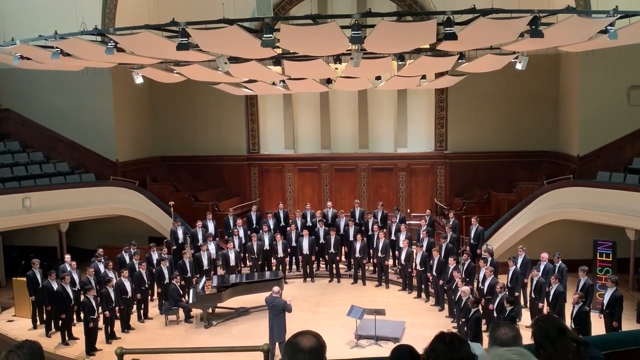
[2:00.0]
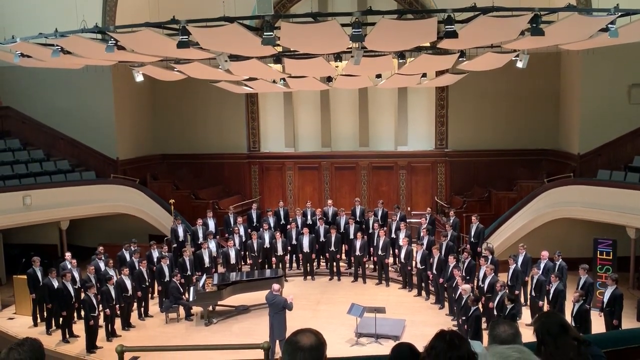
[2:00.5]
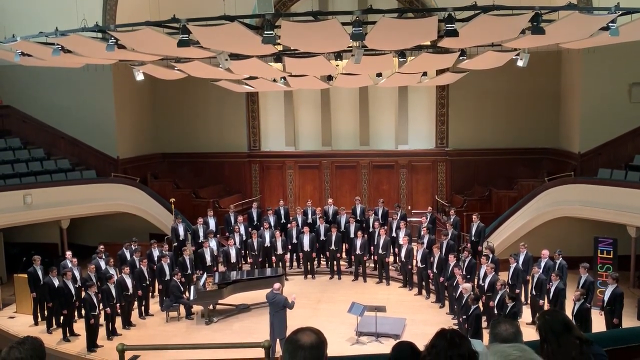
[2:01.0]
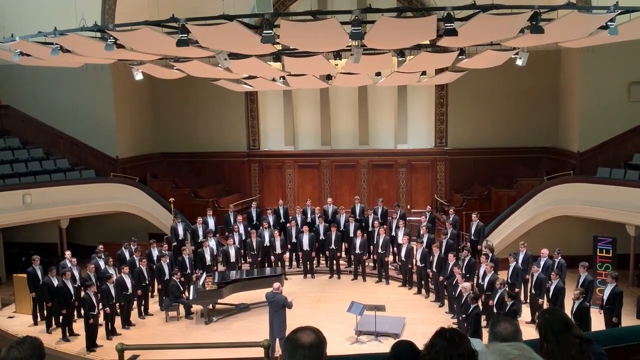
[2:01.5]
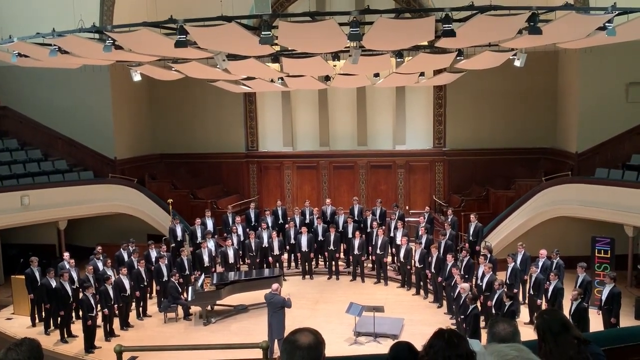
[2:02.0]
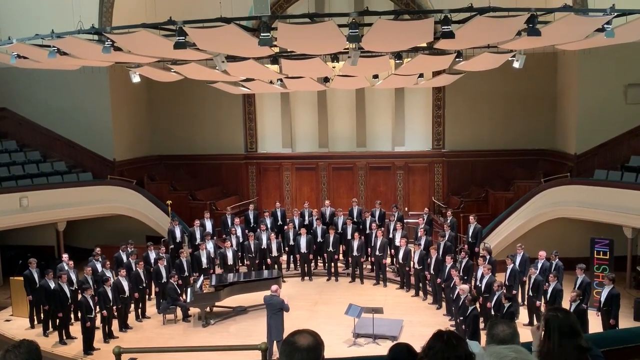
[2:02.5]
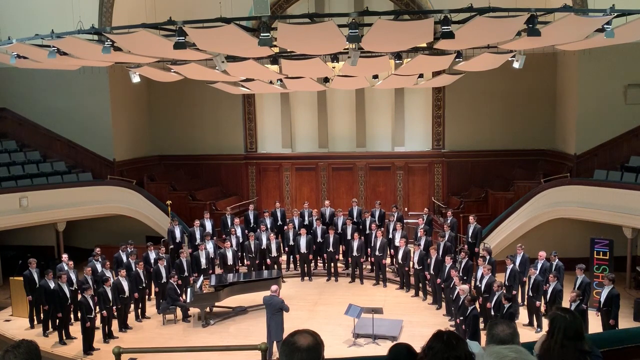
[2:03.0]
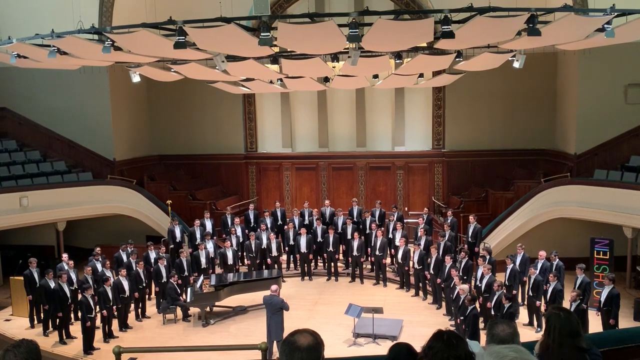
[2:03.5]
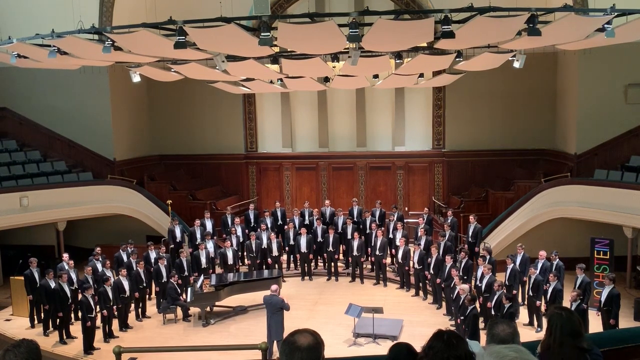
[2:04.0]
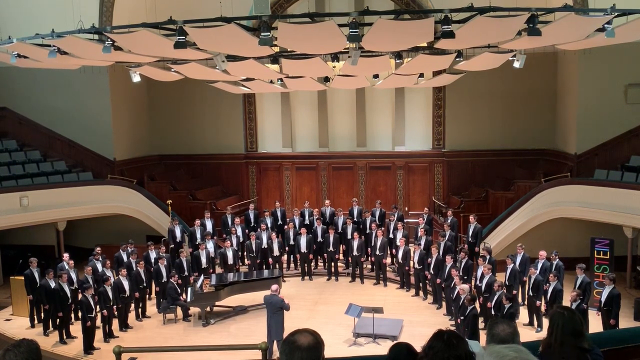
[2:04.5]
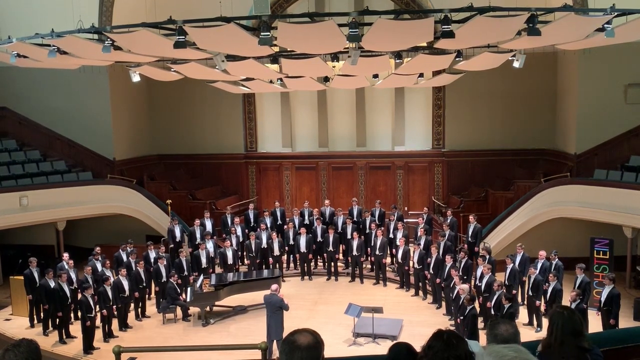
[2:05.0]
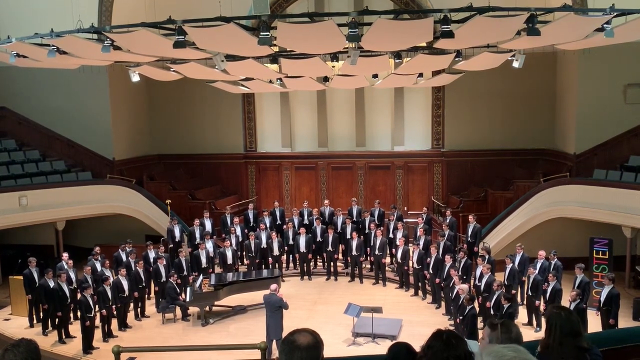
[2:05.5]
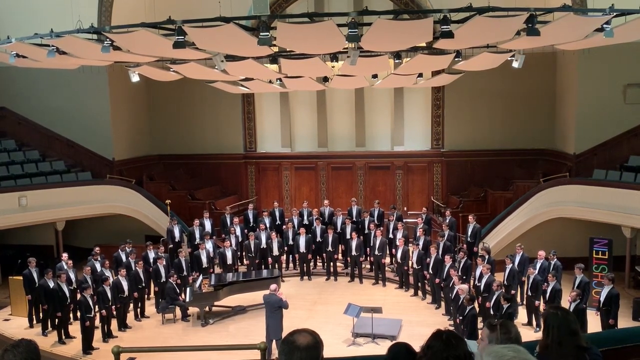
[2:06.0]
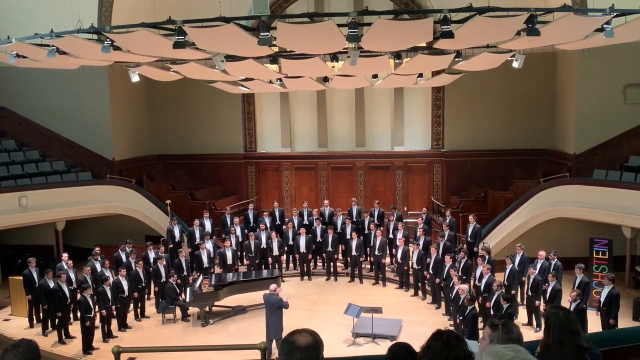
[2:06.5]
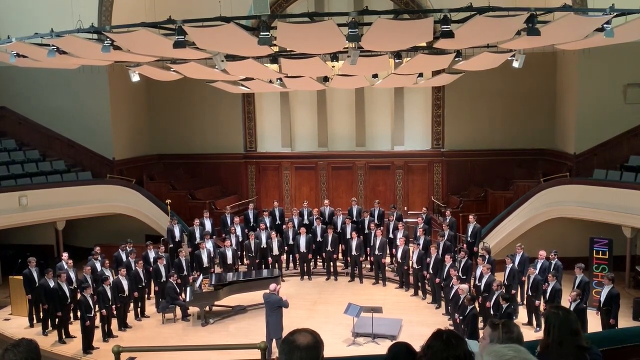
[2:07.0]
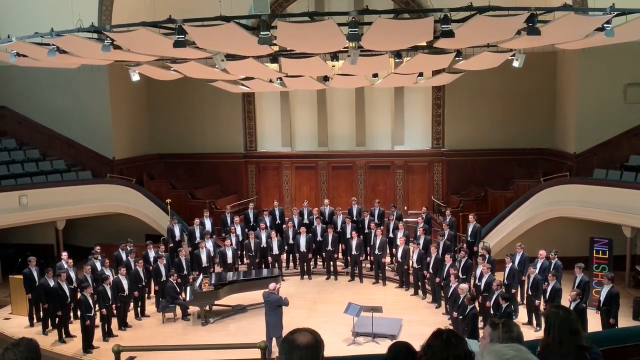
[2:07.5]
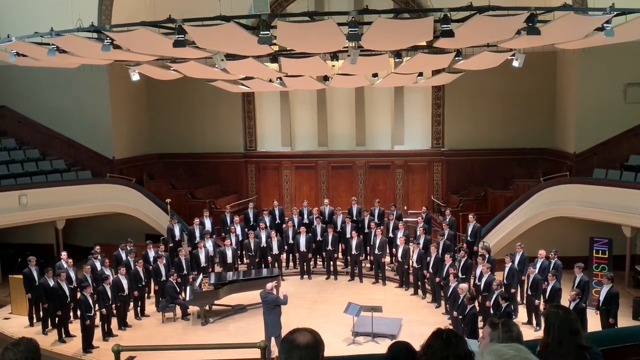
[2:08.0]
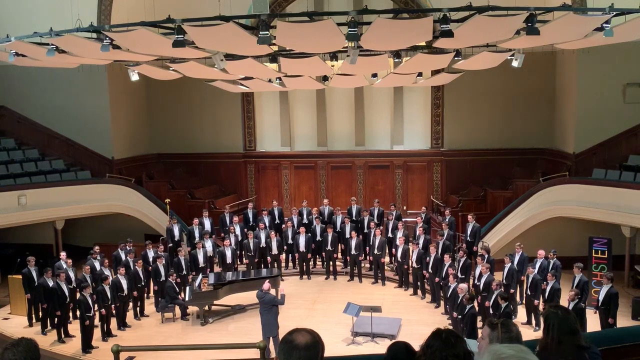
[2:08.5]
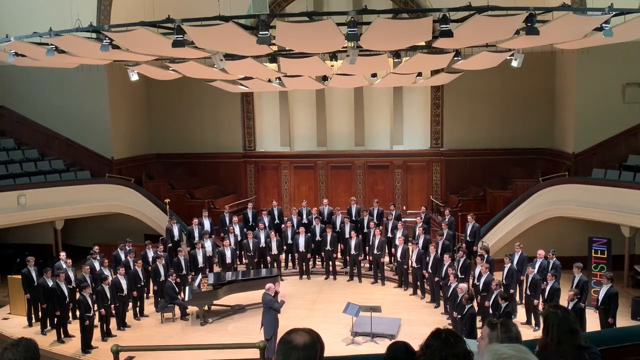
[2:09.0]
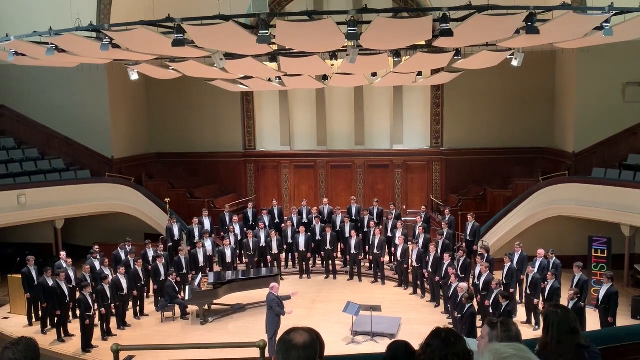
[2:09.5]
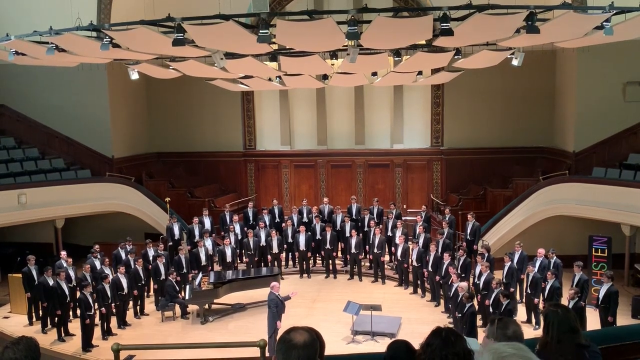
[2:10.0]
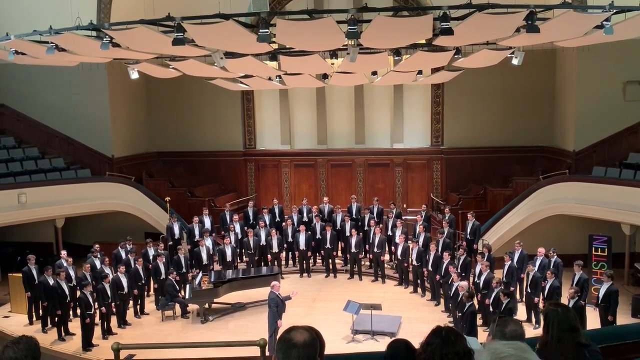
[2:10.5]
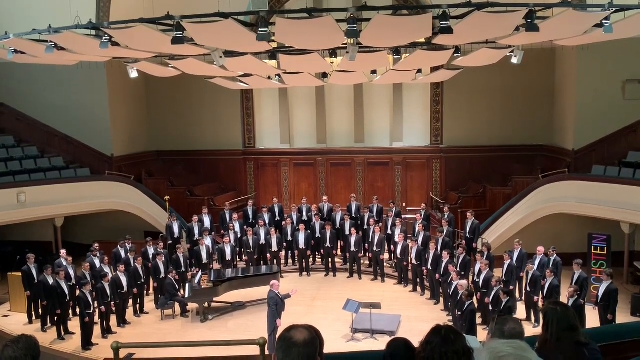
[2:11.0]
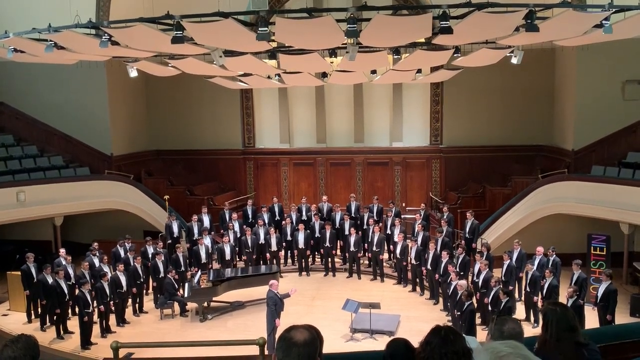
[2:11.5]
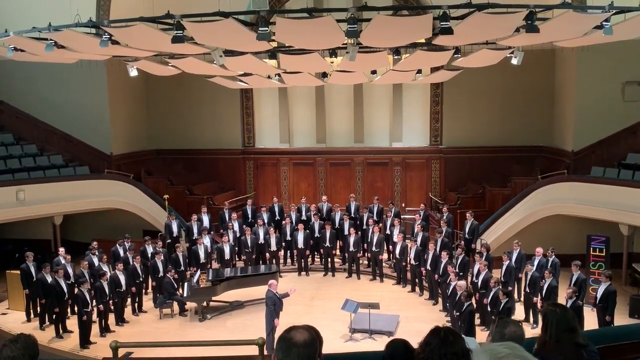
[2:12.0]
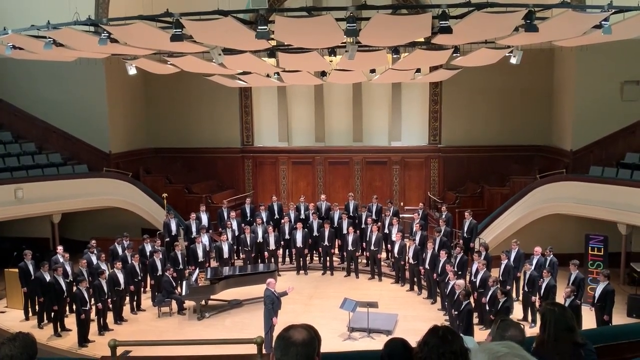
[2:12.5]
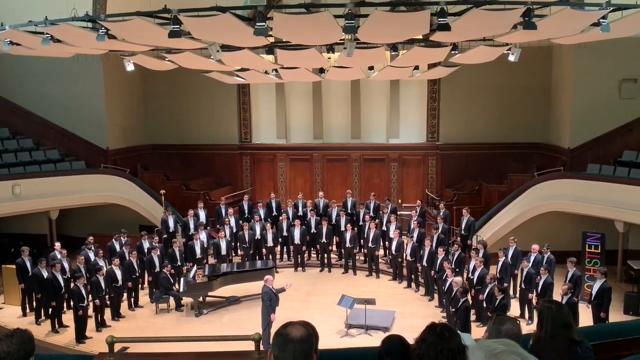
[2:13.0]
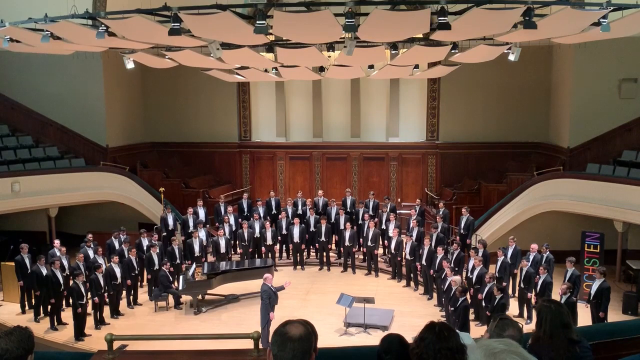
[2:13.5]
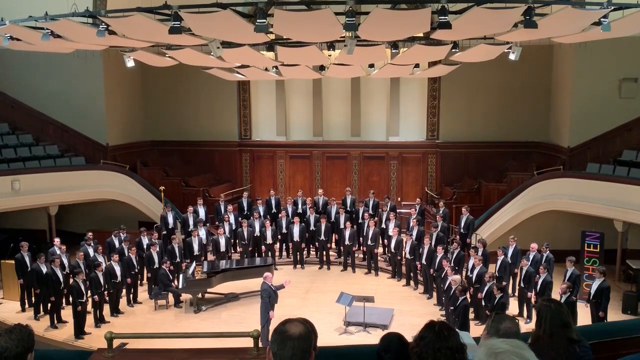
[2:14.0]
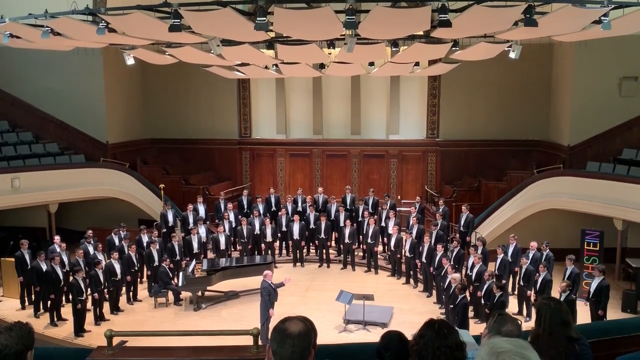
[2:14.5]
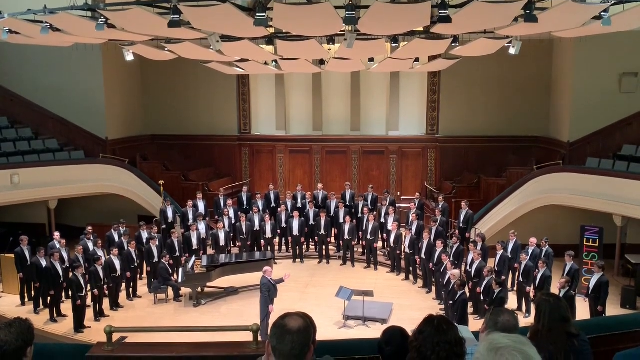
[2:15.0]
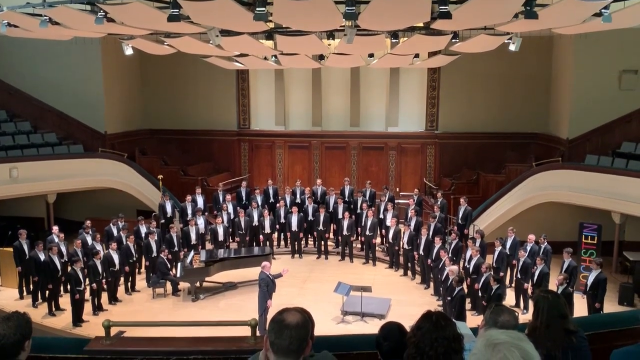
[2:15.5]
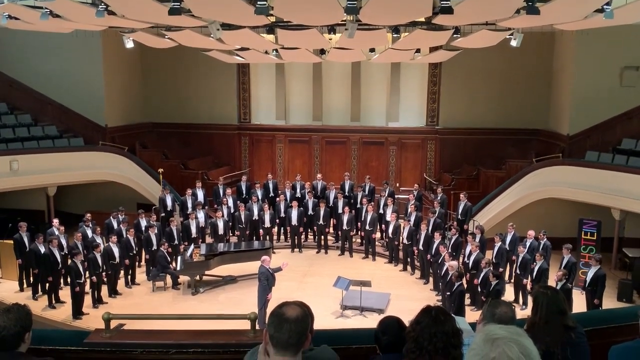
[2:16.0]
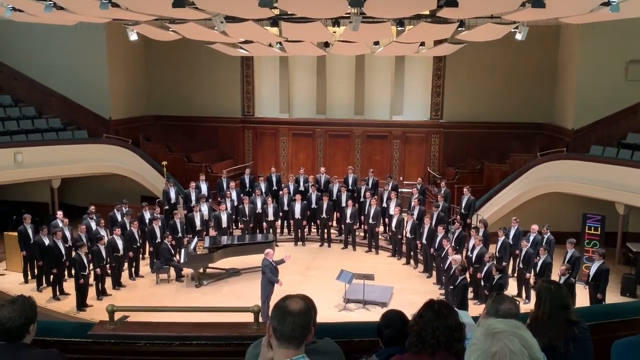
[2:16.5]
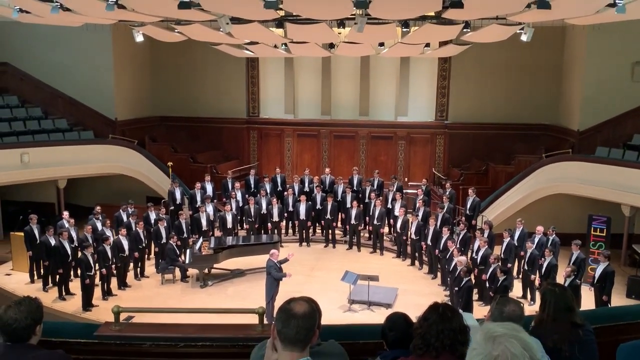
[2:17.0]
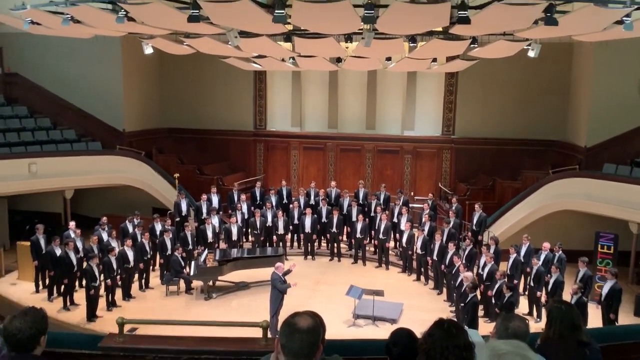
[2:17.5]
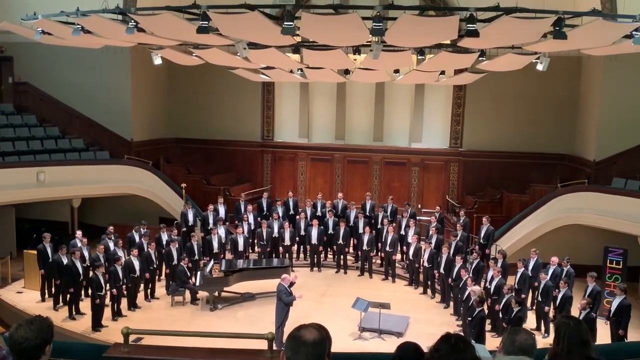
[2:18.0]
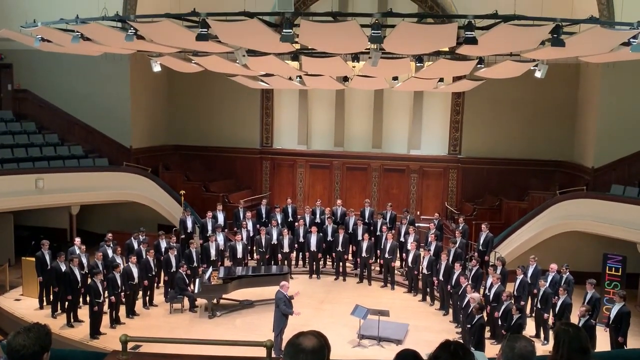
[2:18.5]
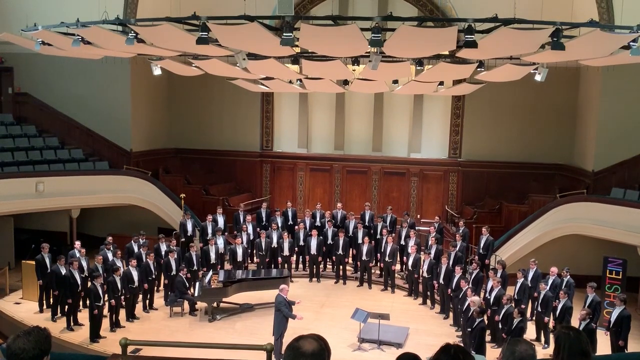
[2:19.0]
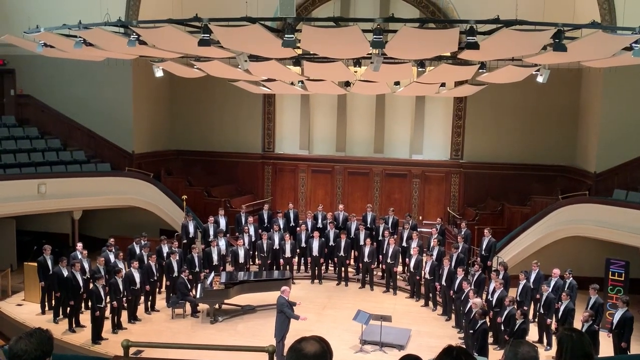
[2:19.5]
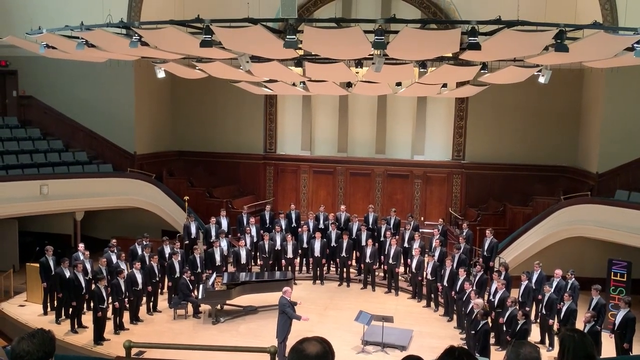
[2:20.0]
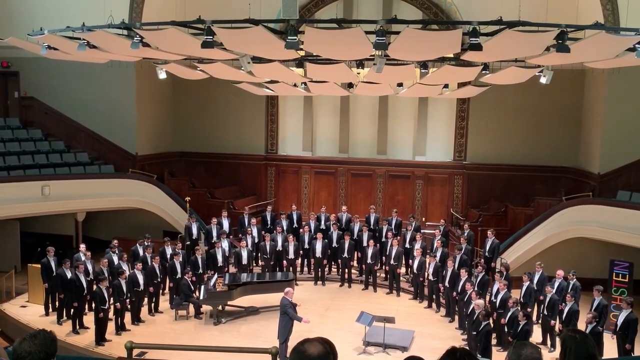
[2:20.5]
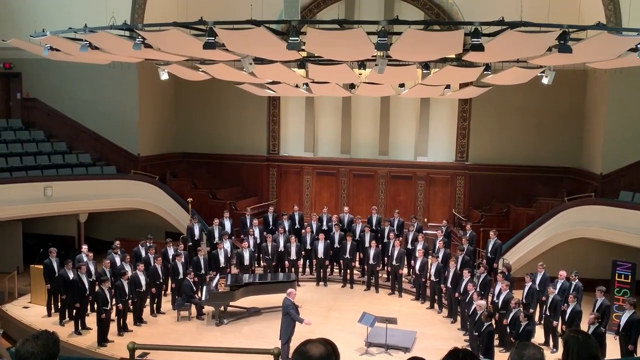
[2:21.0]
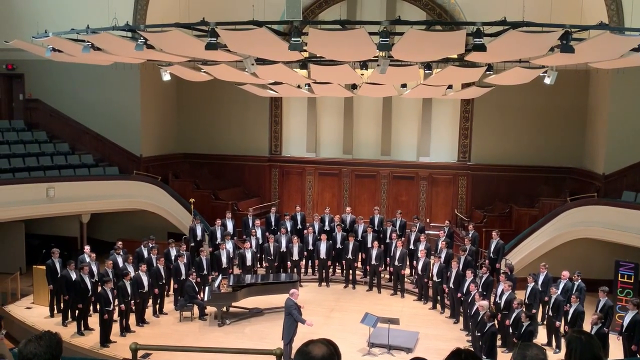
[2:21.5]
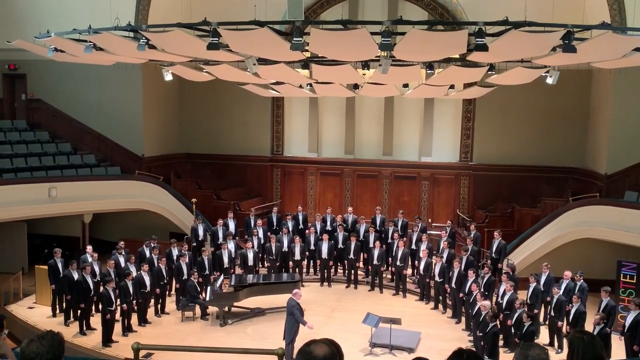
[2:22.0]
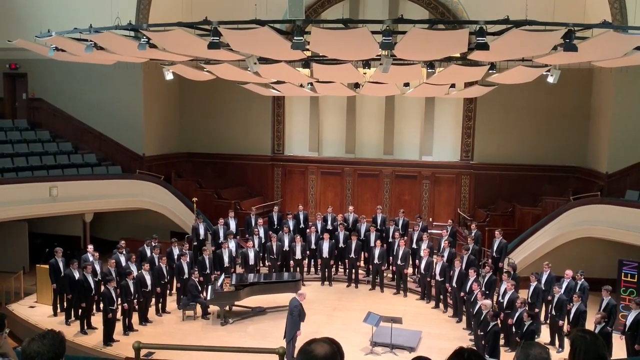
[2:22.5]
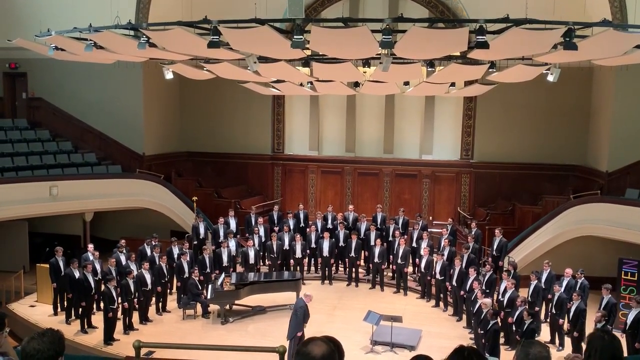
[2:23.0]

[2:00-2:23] The choir of male singers and the conductor remain in view. The conductor is in the center of the stage facing the men in the center, then turns toward his right to face the men on the right side of the stage, his left arm outstretched toward them and his right arm by his side. He is not moving very much. He then uses his left arm to wave the men in and extends his right arm as well, though his arms still are not moving very much as he conducts. Two music stands are in the center of the stage, neither appearing to have any sheet music on it. The men stand in the center of what looks like a theater or auditorium, with audience members at the bottom of the screen, the backs of their heads toward the camera. Some lights are visible above, and brown wall paneling is behind the men.